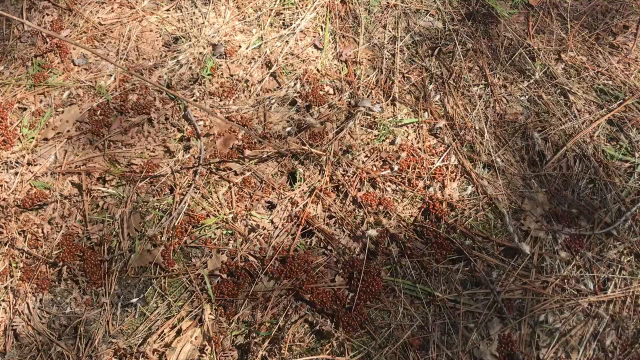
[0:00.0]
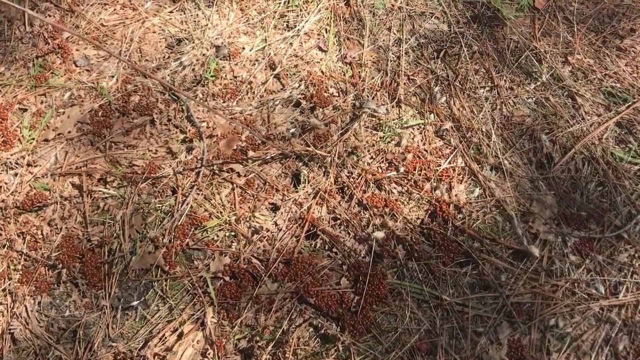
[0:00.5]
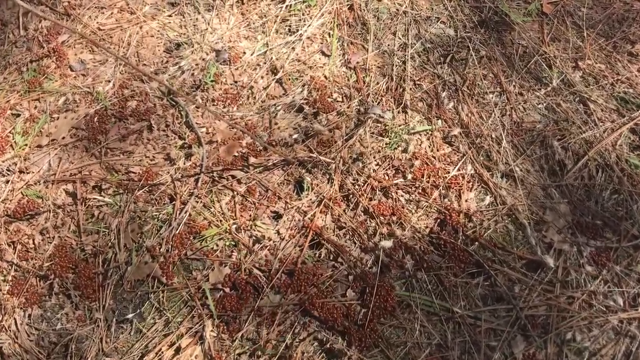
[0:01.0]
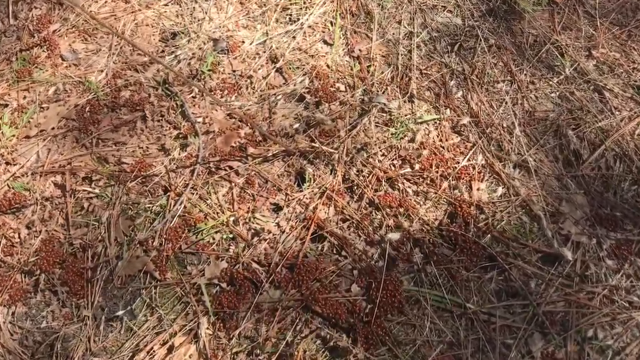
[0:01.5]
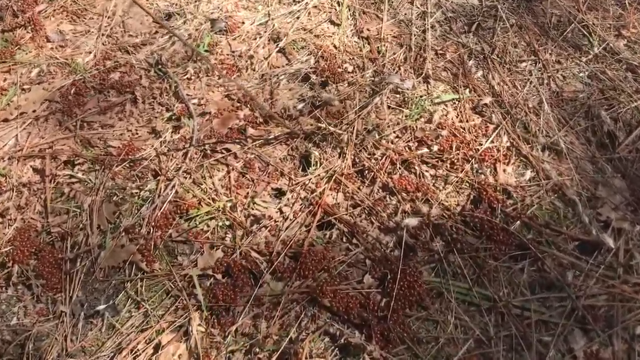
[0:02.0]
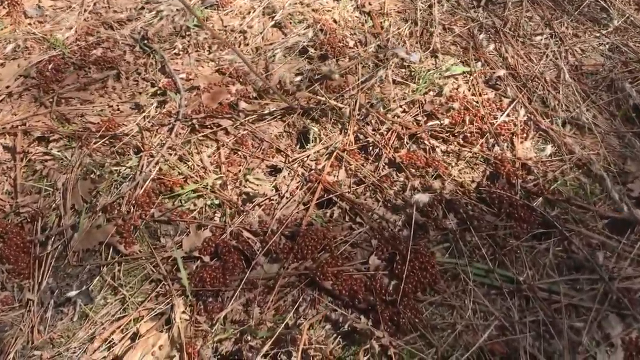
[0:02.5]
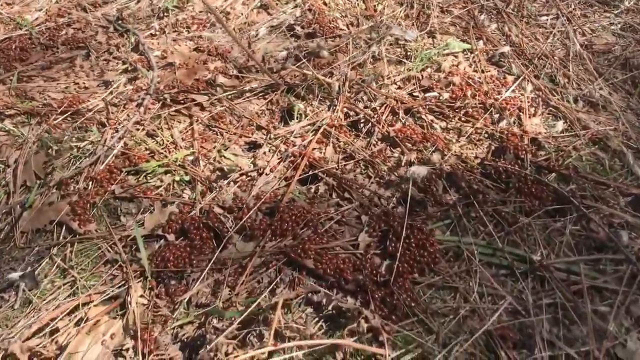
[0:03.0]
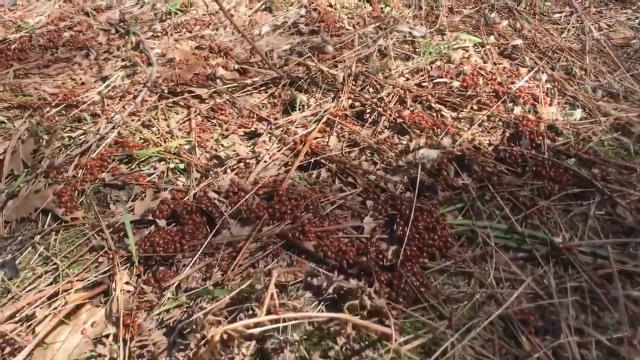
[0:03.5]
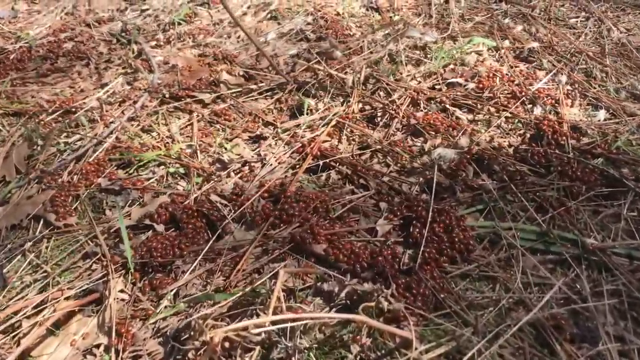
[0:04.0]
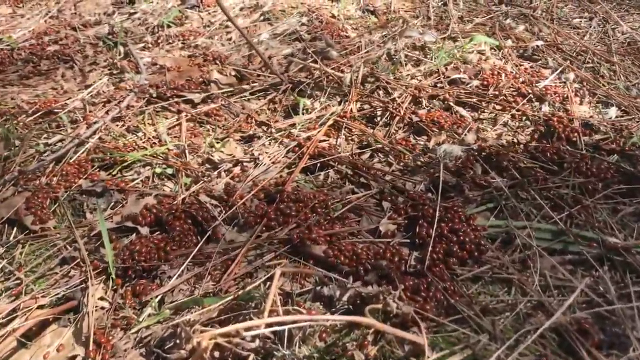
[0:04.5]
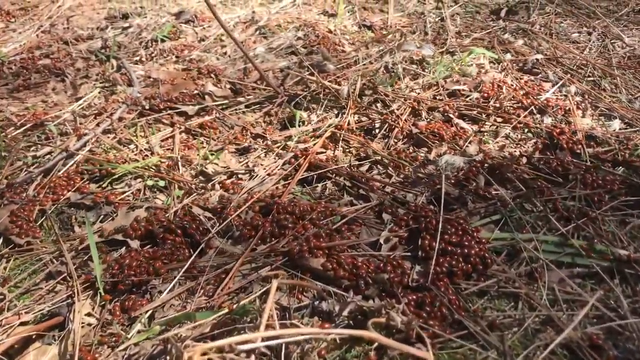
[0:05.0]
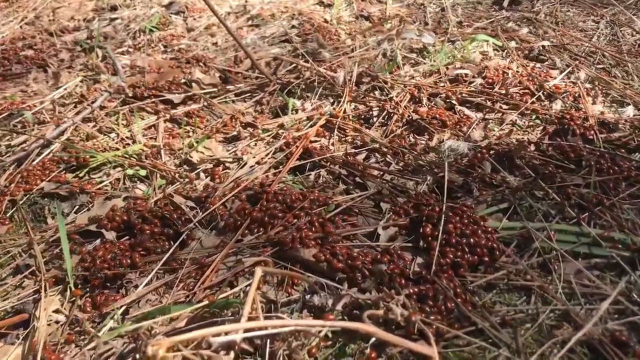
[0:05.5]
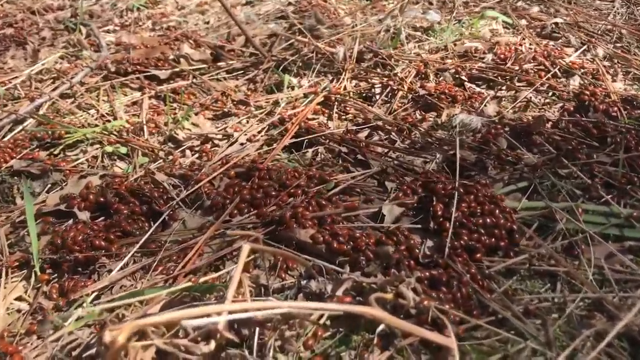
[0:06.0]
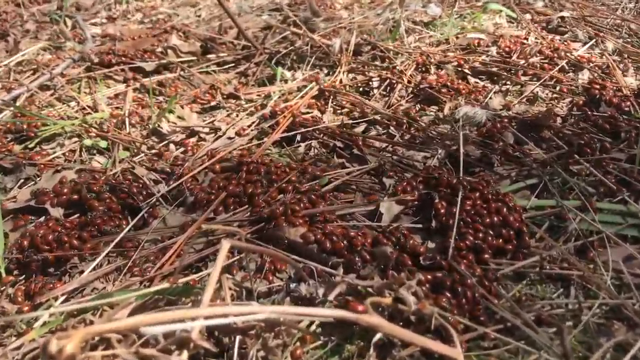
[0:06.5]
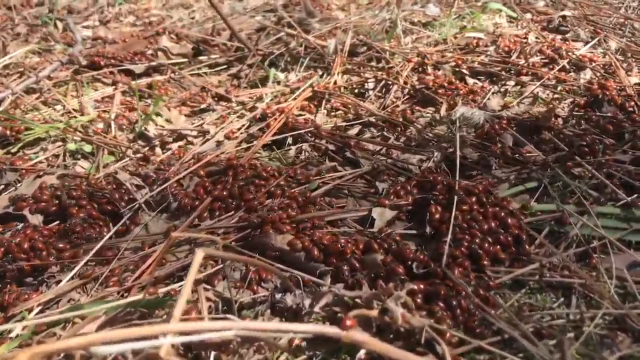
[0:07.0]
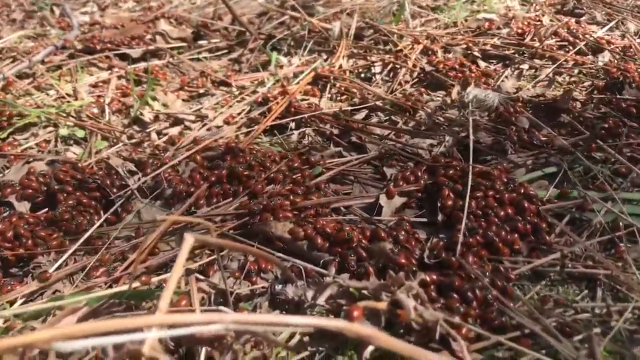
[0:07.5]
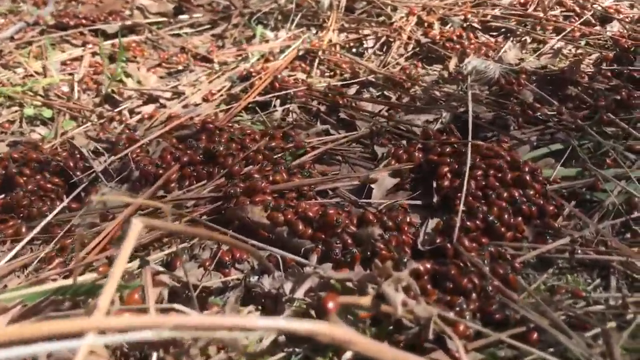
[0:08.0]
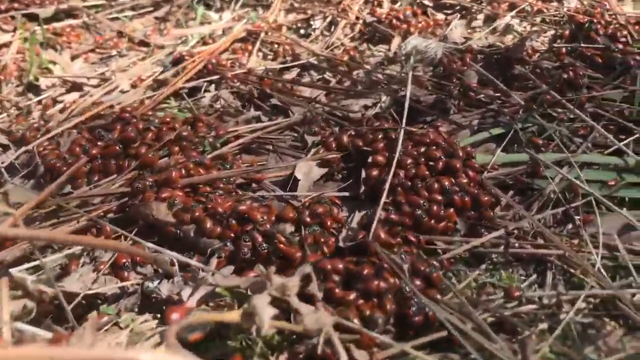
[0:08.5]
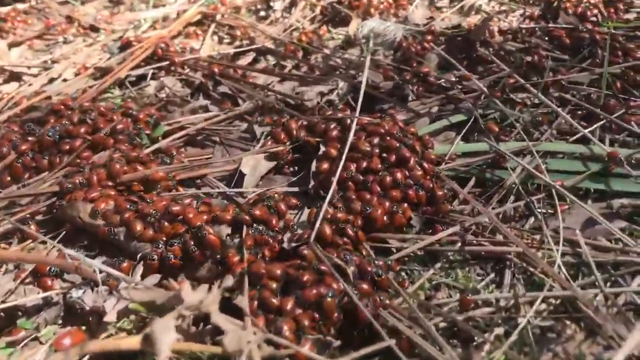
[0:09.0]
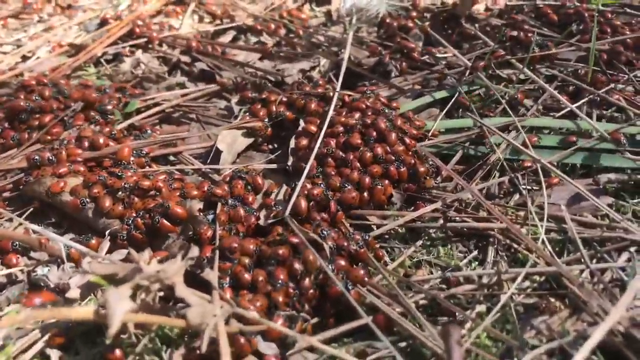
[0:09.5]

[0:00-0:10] The camera looks at the ground, where a patch of dead grass has been stamped down into kind of a mulch by trampling over time. The cameraman then kneels down to zoom in at ground level, so the camera is almost horizontal with the ground, revealing that the ground is actually covered in hundreds and hundreds of tiny bugs that resemble kidney beans. The bugs swarm in big clumps that seem to move in some sort of hive-mind formation, in individual areas containing distinct groups.